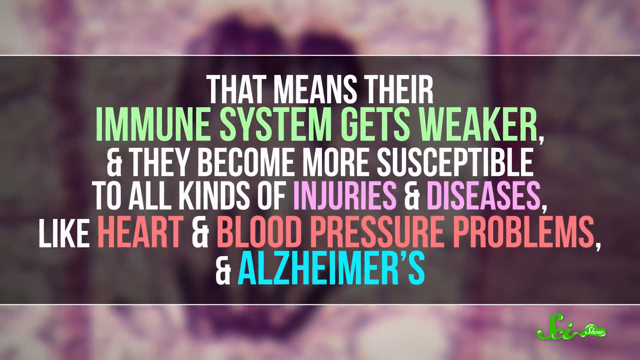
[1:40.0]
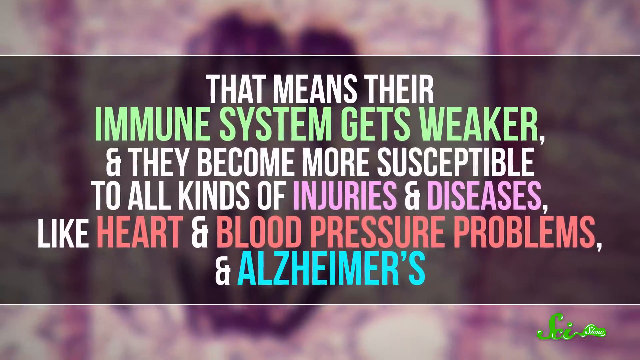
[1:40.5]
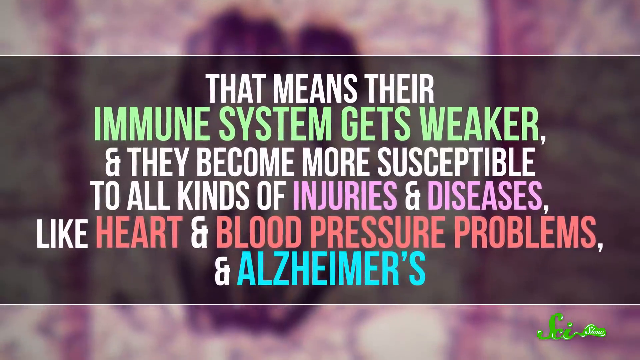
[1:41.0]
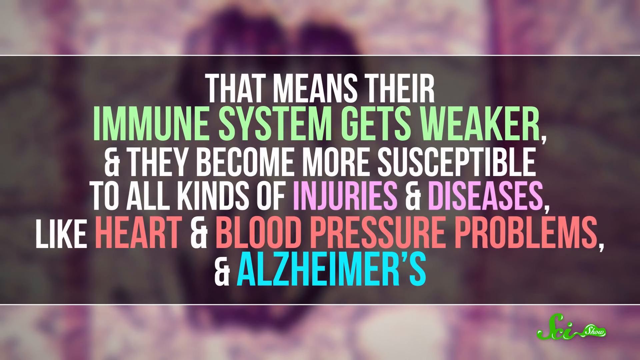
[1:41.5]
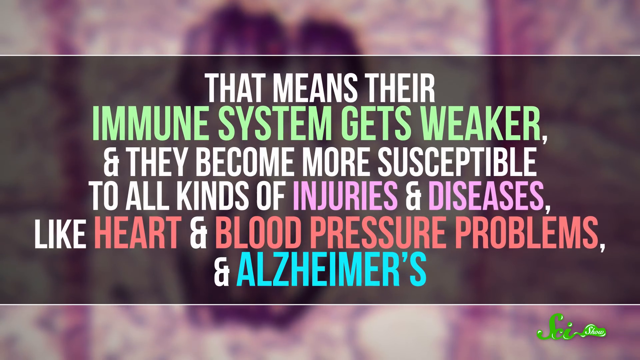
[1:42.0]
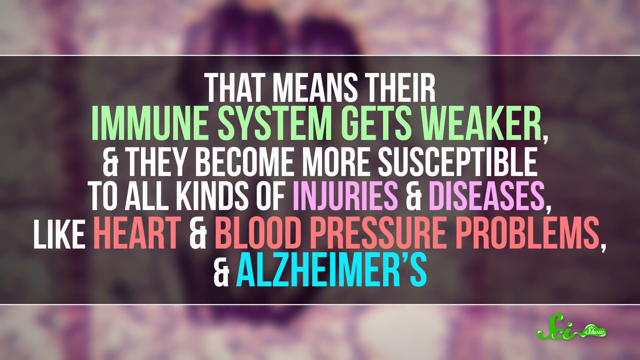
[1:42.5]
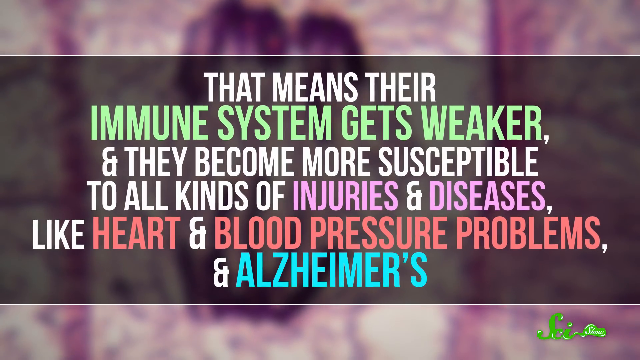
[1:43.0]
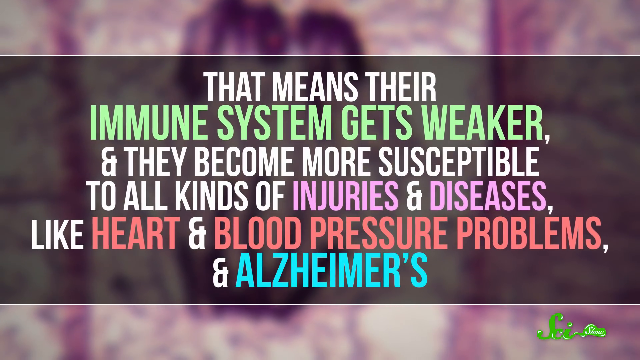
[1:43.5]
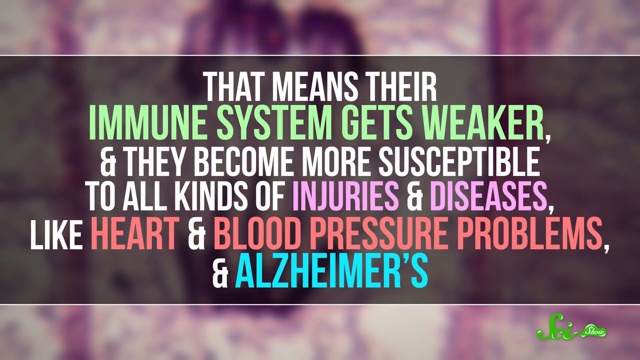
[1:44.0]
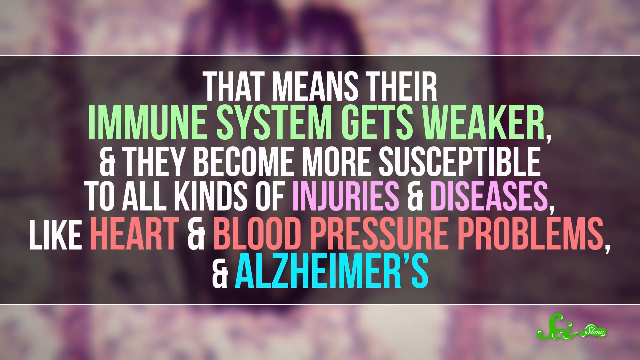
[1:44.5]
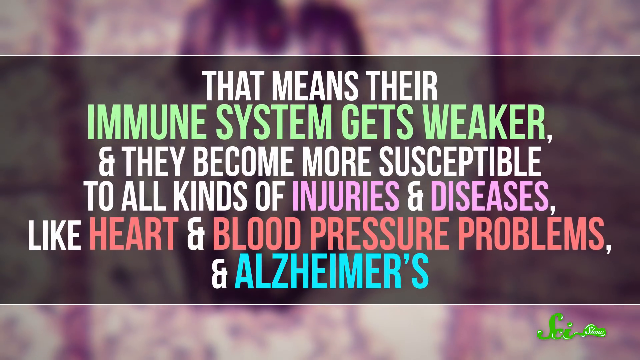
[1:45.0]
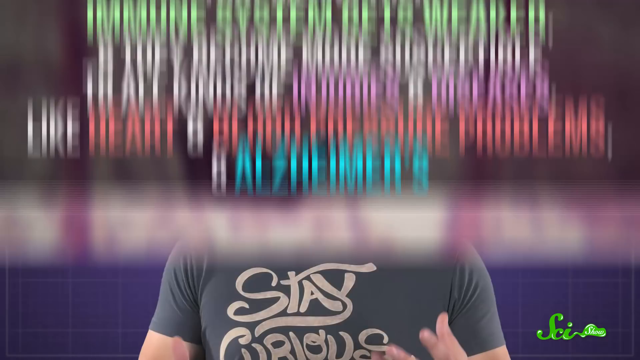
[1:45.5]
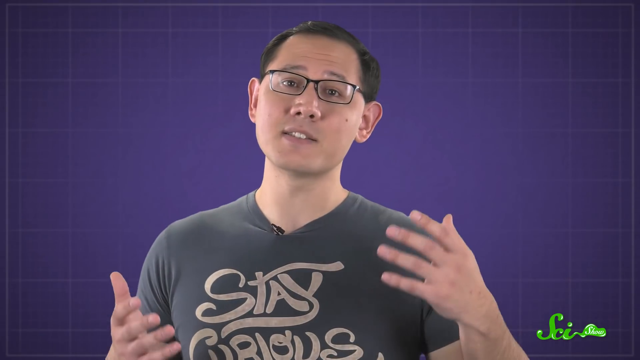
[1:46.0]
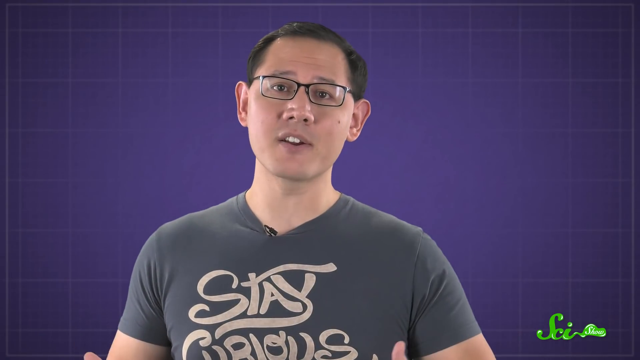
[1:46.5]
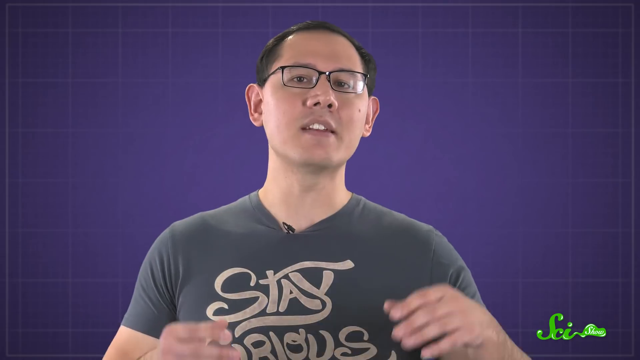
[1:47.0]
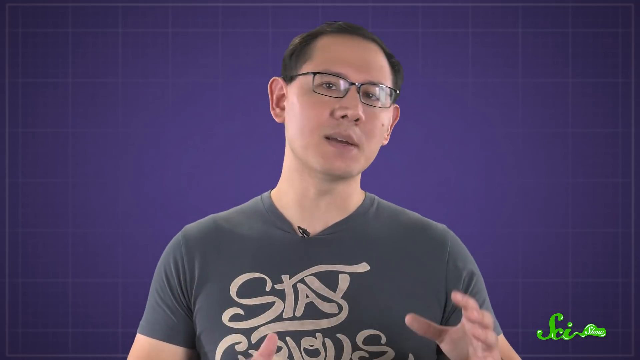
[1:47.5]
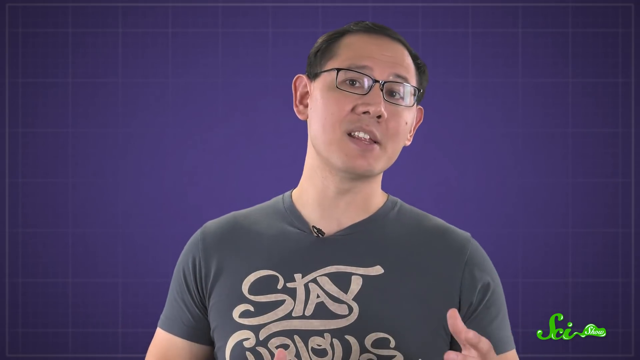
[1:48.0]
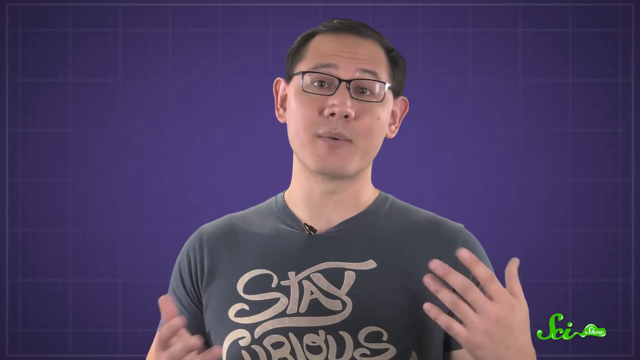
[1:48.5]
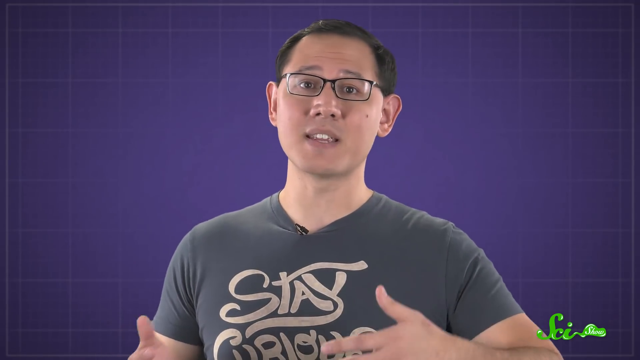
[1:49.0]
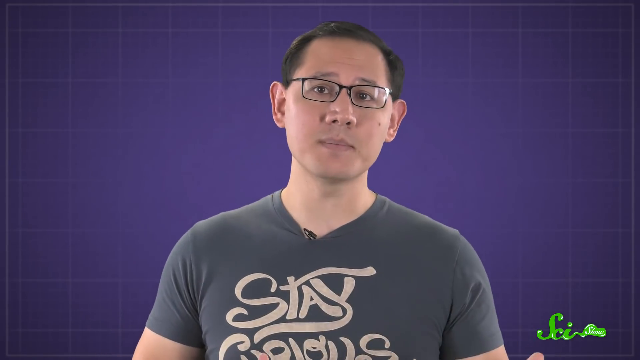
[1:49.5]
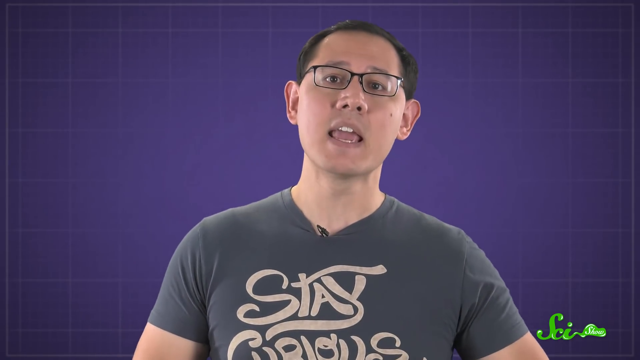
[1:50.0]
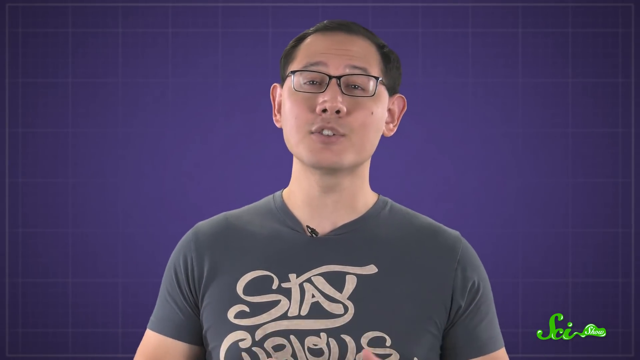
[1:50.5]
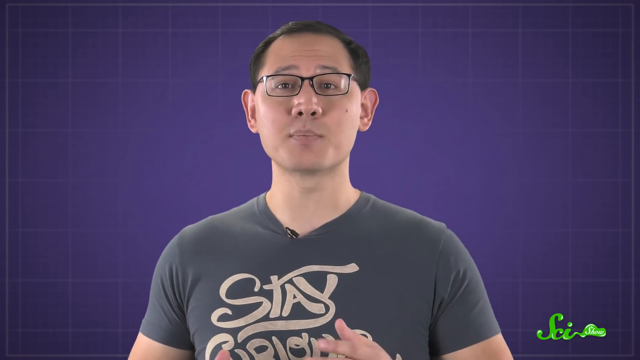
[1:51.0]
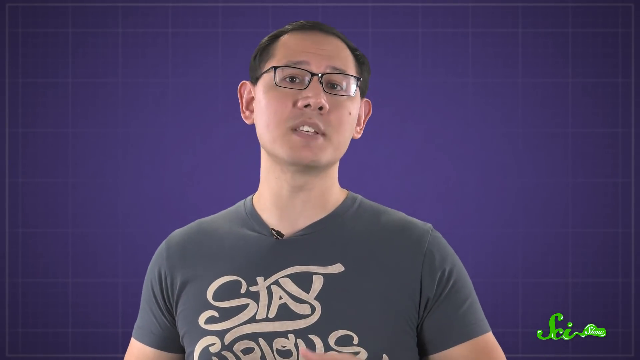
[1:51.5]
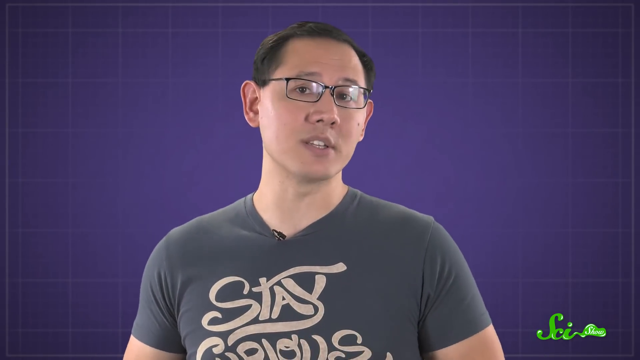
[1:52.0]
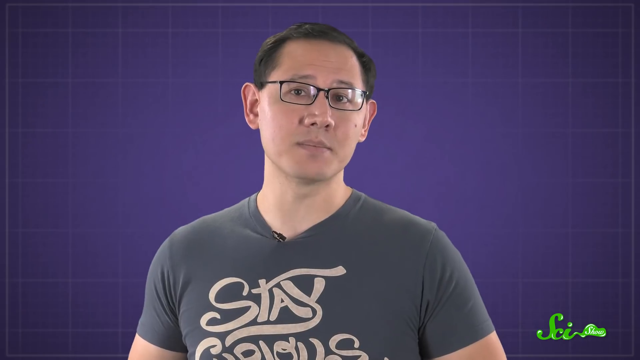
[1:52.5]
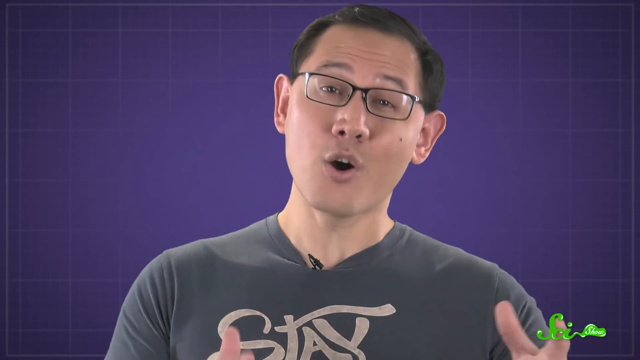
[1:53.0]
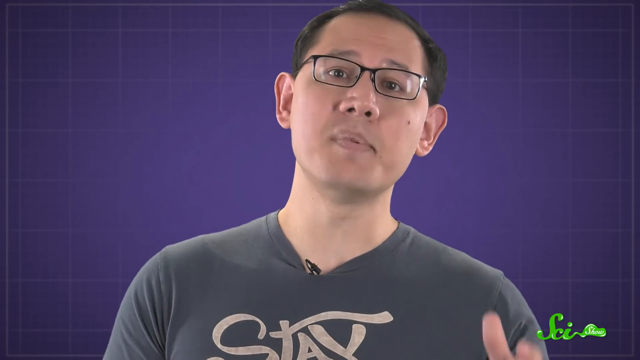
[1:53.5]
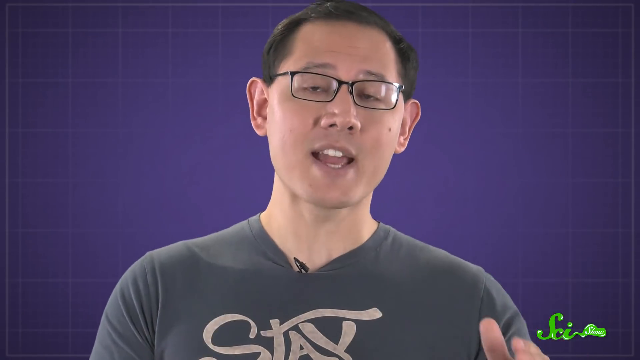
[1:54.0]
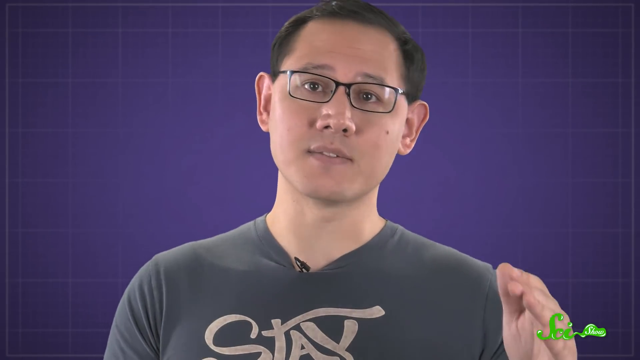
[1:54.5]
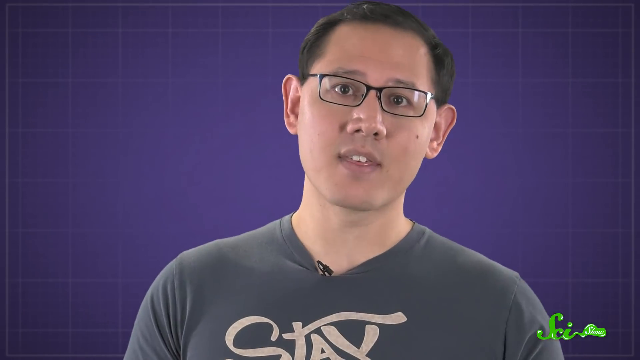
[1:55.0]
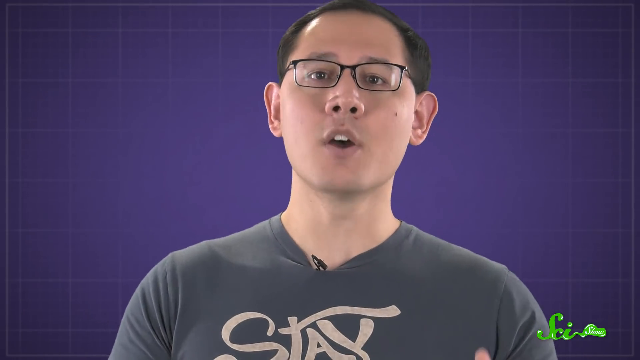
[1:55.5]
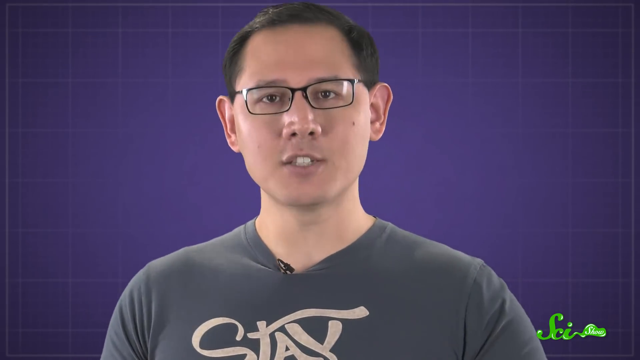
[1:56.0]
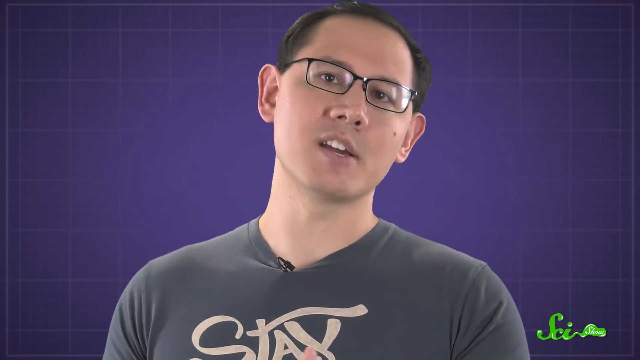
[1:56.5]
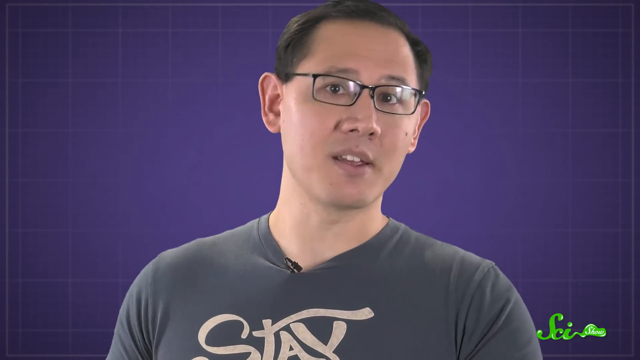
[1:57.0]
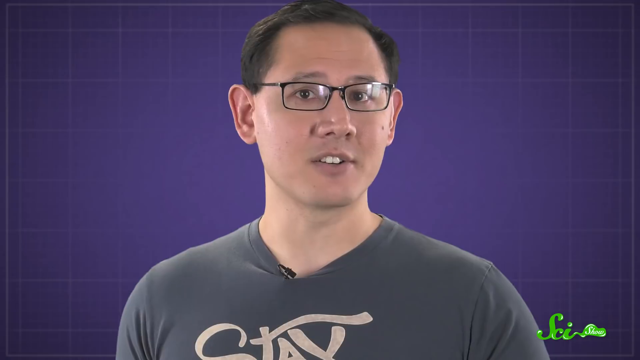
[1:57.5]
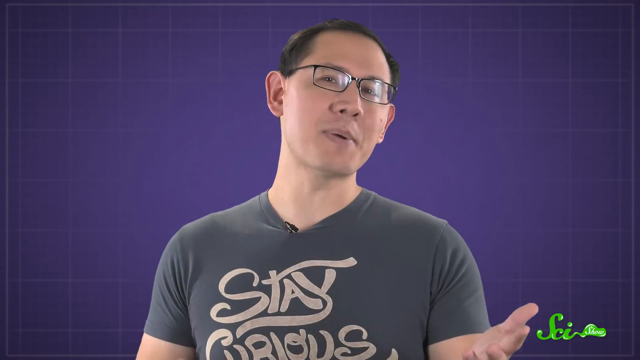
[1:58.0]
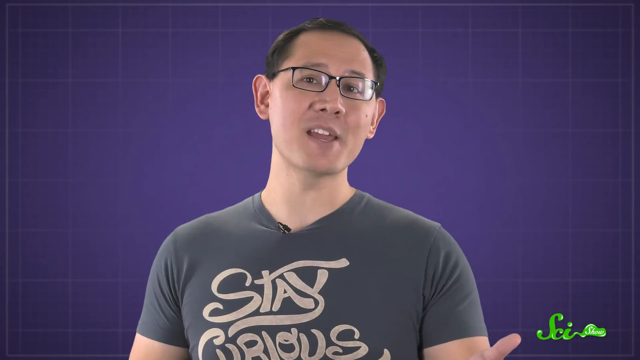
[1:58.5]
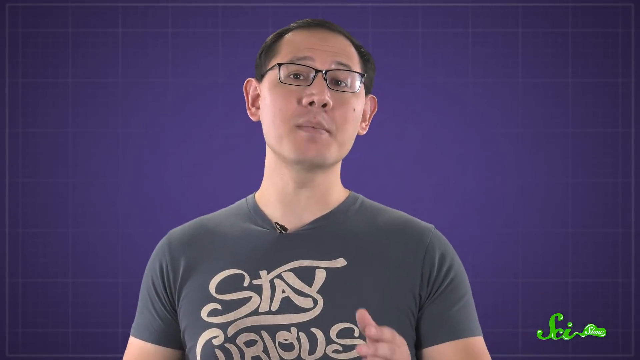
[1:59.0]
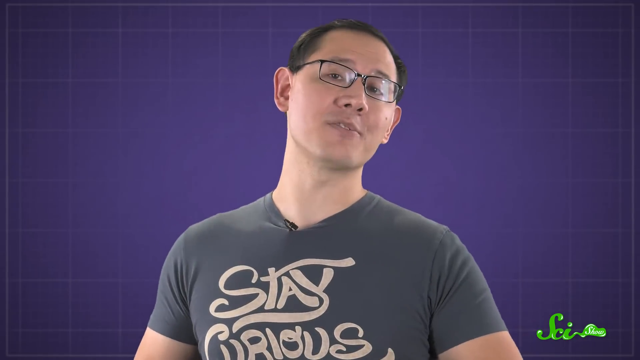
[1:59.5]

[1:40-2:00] The words "That means their immune system gets weaker and they become more susceptible to all kinds of injuries and diseases like heart and blood pressure problems and Alzheimer's" appear against a blurry background, in white, green, purple, red and blue letters. A man with short black hair and black-framed eyeglasses talks to the camera. A small black microphone is clipped to the collar of his dark gray t-shirt, which has the word "stay" on it and the word "curious" beneath that. He gestures to the camera and looks interested in what he is saying. In the bottom right corner is a green logo with white letters reading "SciShow" in a text styled to look like an oozing liquid.